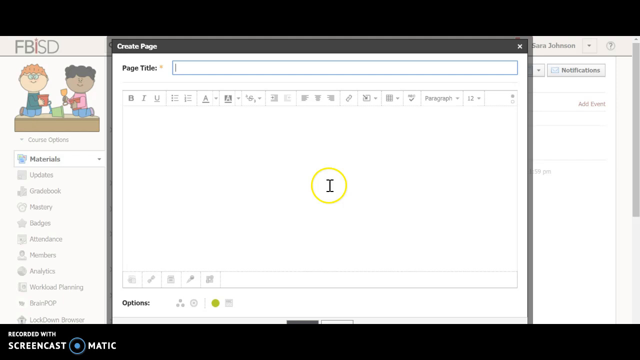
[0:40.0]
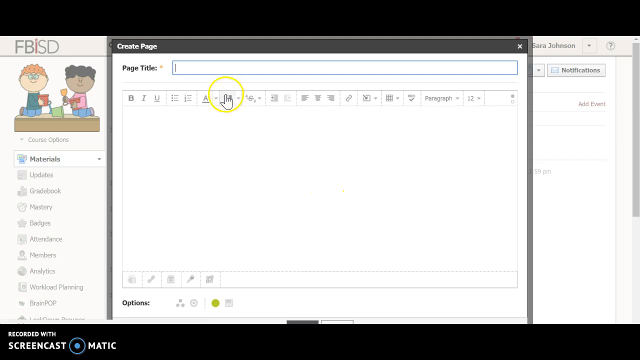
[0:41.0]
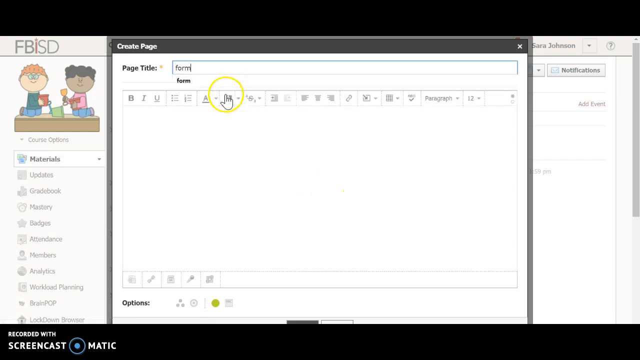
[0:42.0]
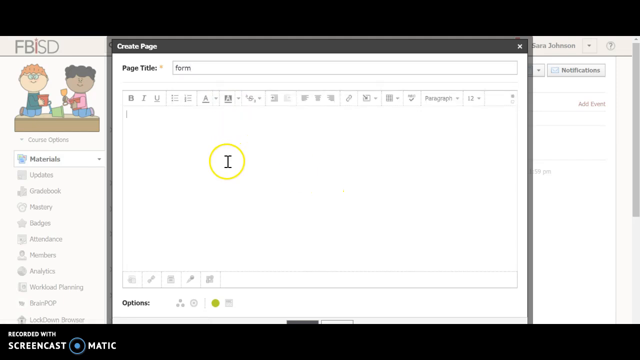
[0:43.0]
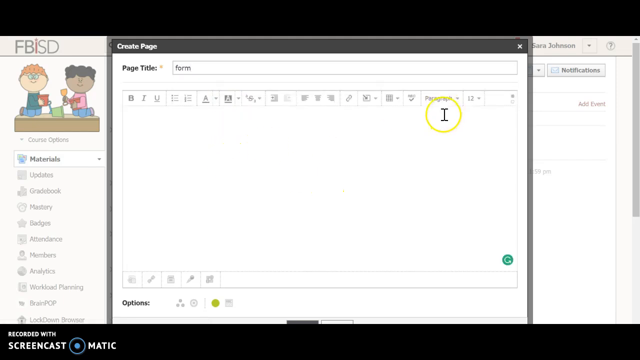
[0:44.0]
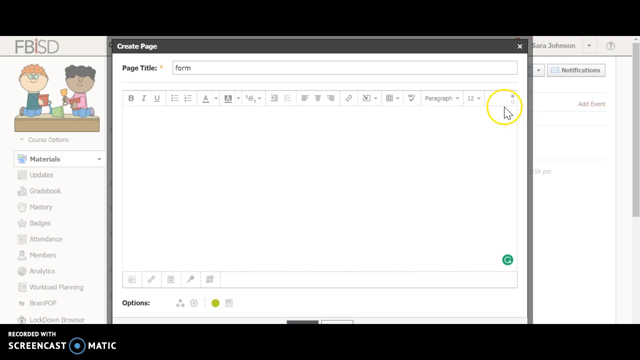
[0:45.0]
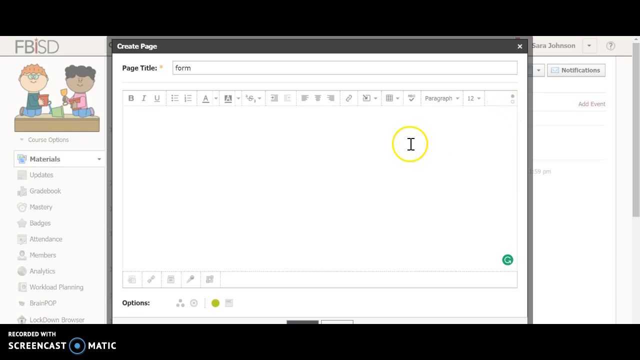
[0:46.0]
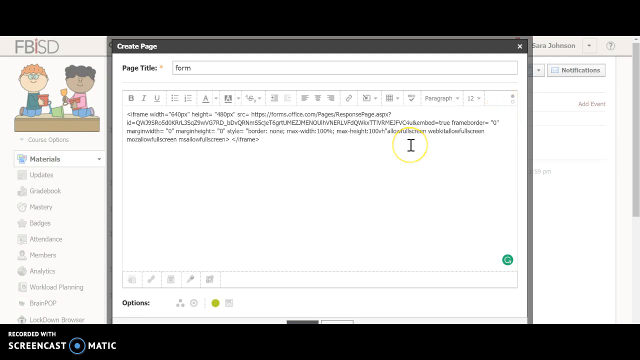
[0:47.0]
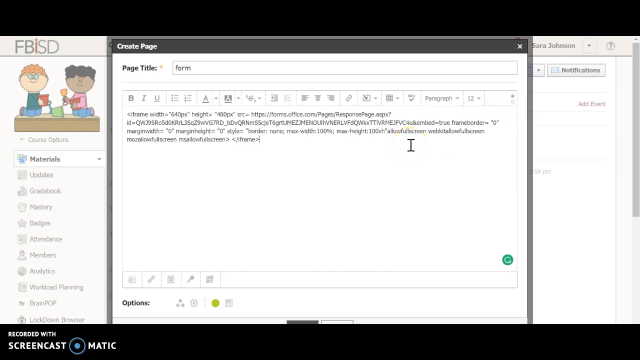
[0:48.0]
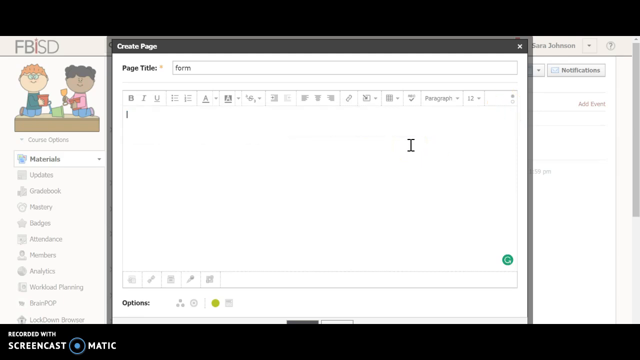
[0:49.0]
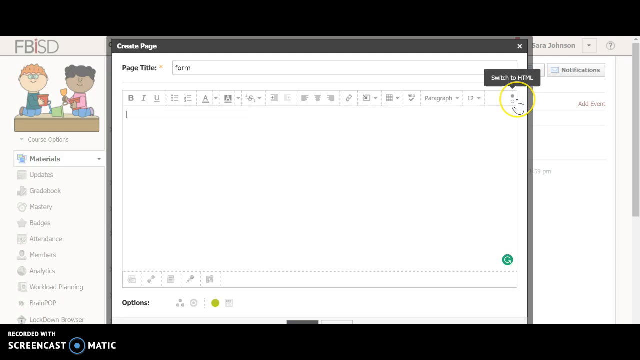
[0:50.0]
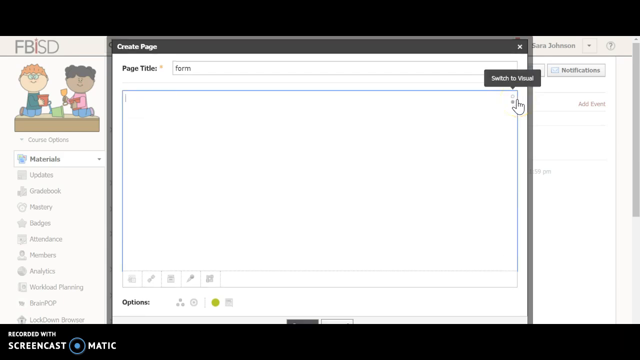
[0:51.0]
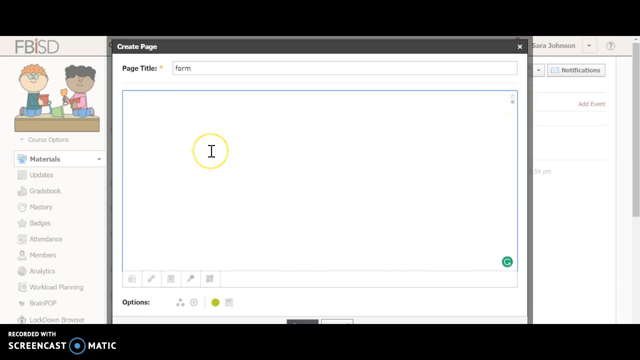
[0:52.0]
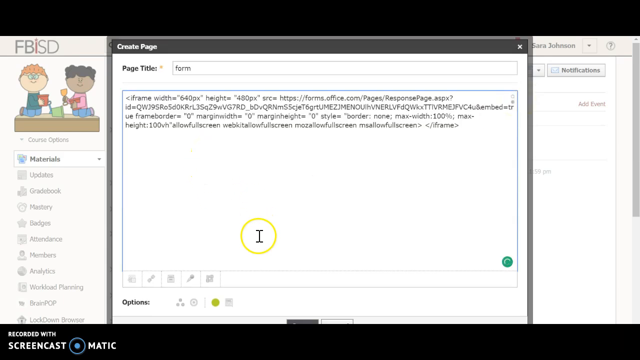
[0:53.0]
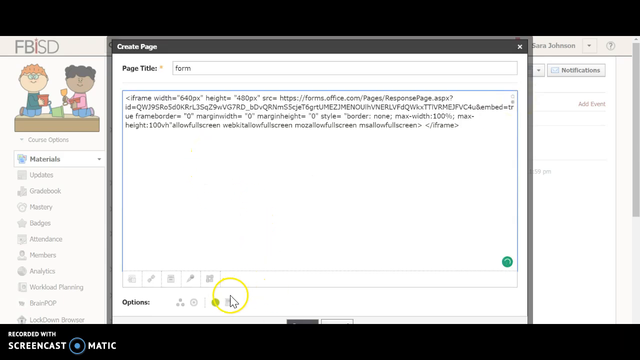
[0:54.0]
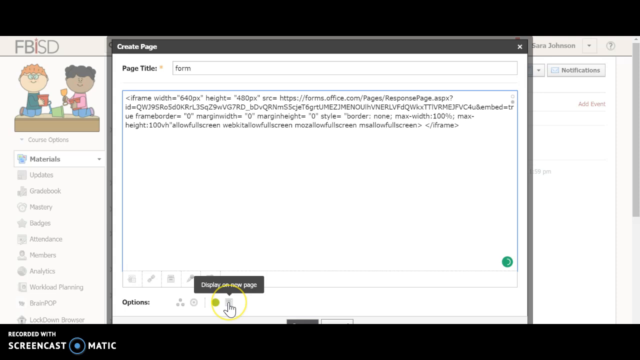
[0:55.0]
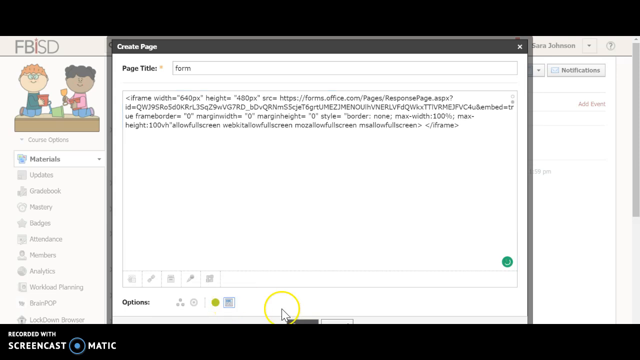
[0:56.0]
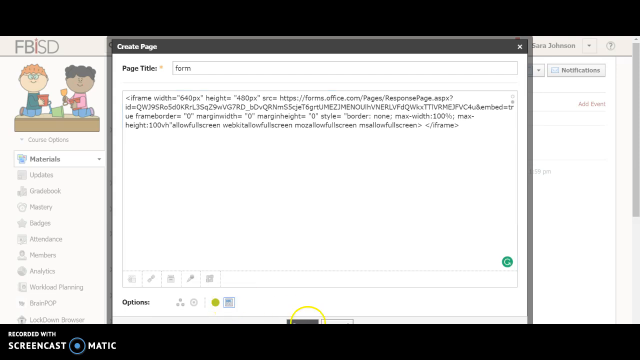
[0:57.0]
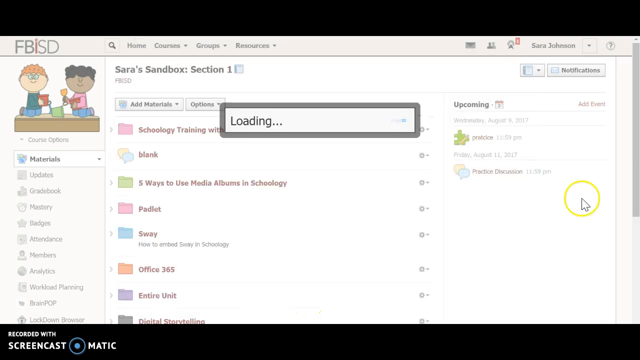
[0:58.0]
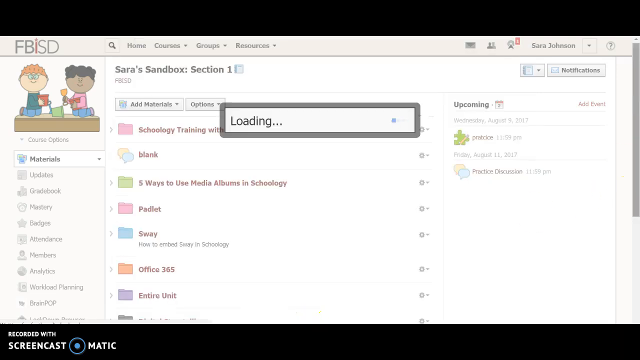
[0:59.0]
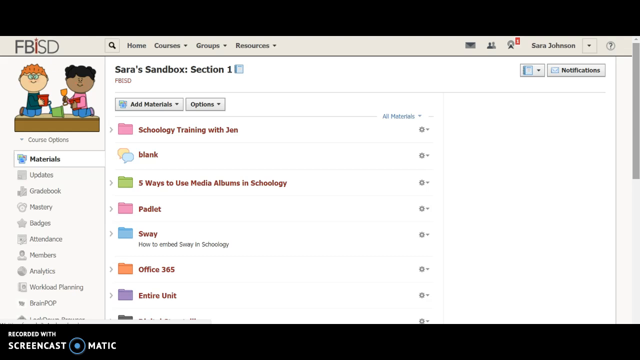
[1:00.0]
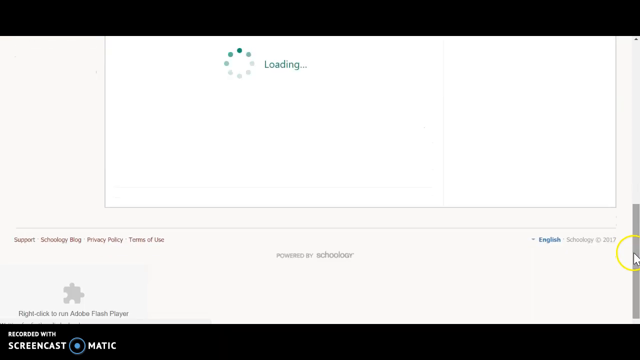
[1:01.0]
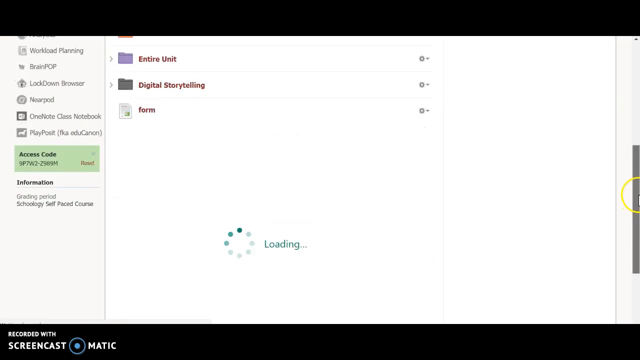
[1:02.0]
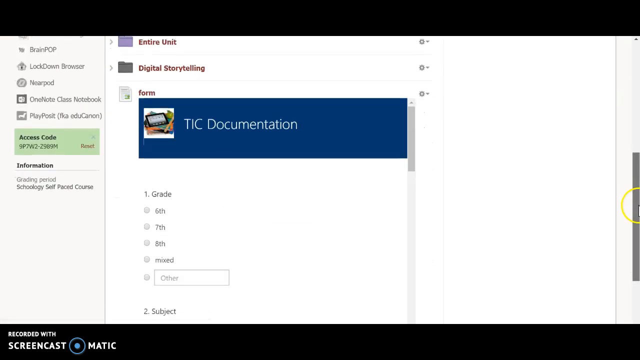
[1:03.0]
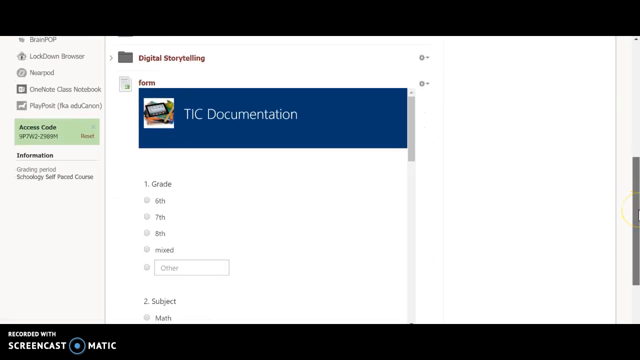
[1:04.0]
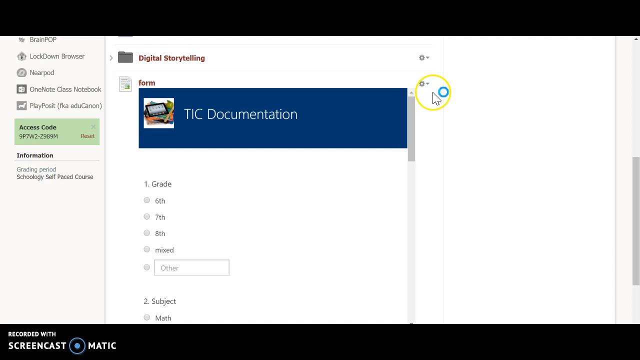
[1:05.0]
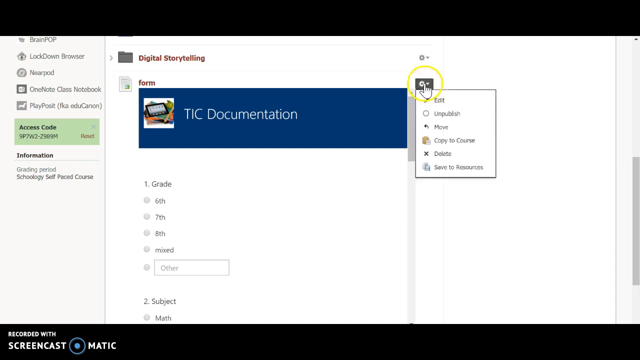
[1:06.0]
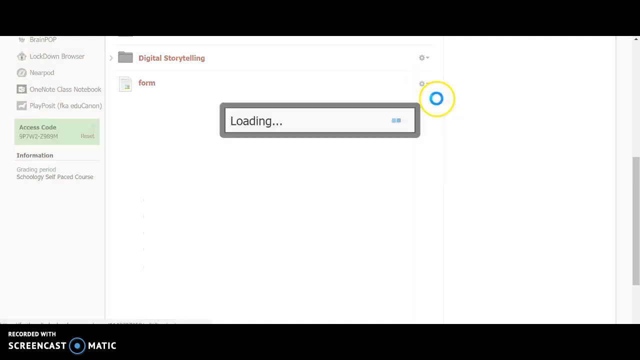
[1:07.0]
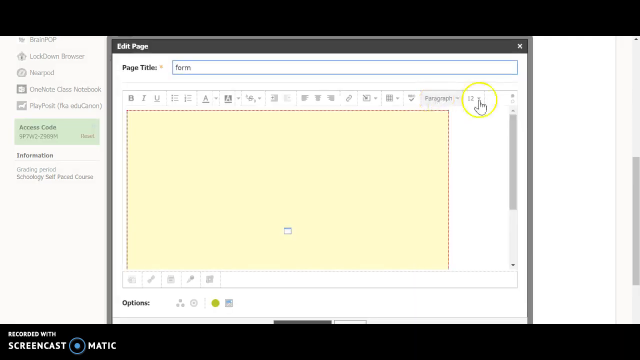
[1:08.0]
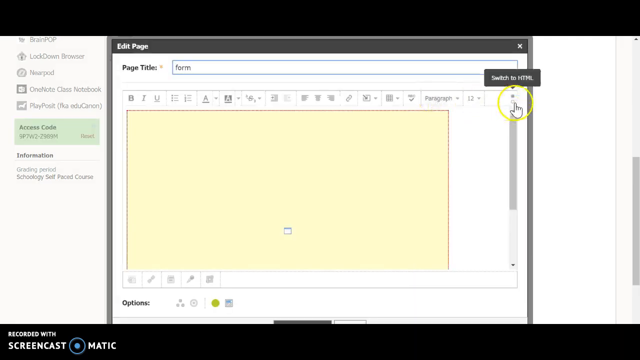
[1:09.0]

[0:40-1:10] A screen shows two kids playing on a sandpile, and it says "course options." To the left it lists "materials, update, gradebook, mastery, badges, attendance, members, analytics, workload planning" and more. It then says "create a page" and "page title." A yellow circle is in the middle, and the user moves it. They change the font and type in "form," which brings up some writing, and they hit it again. They go down to options and then to display, and it says "loading." Then it says "entire unit, digital storytelling, form." They keep clicking on things to bring up other screens on the page, and the yellow circle stays in the middle until they click on something else. Toward the bottom it says "options," and there is a triangle of dots and a circle, with a page behind it that has white writing. Of the two kids in the sandbox, one has orange hair and one has black hair; they are holding shells in their hands, one orange and one yellow.